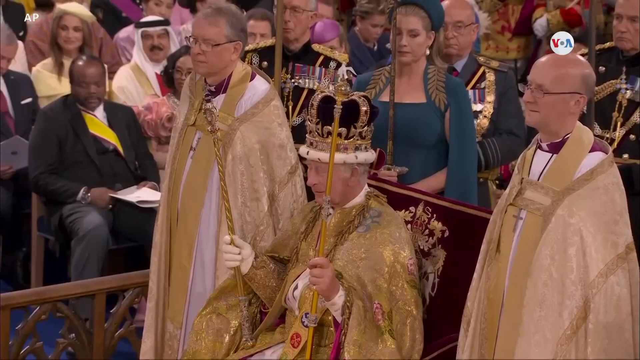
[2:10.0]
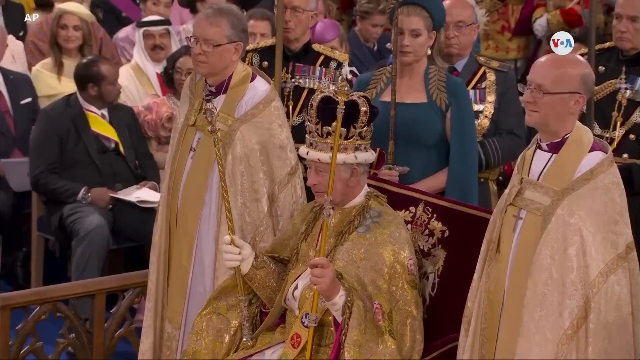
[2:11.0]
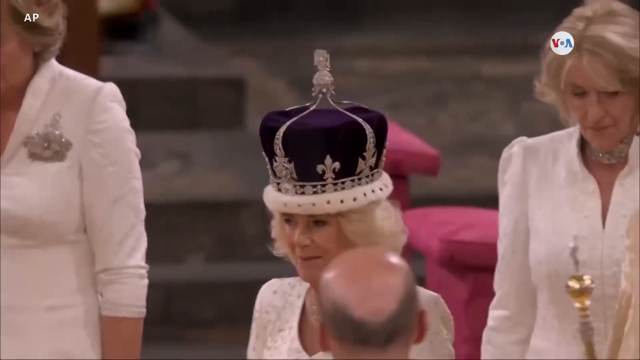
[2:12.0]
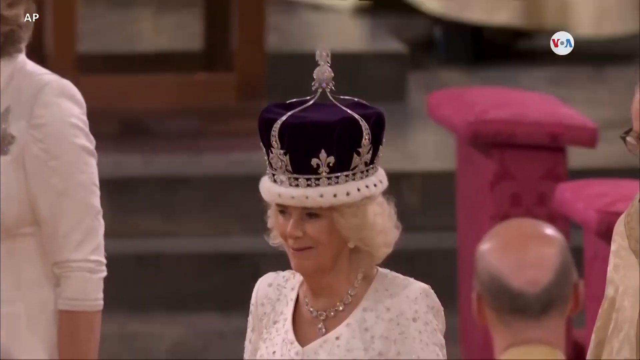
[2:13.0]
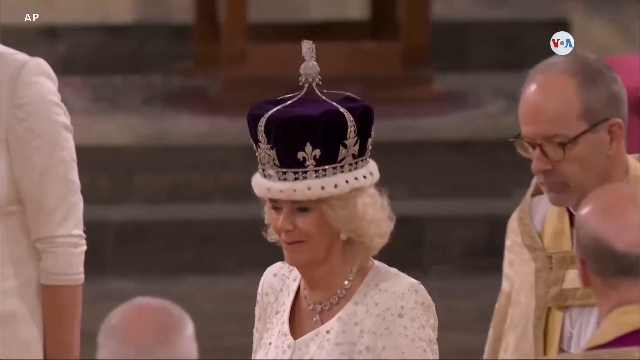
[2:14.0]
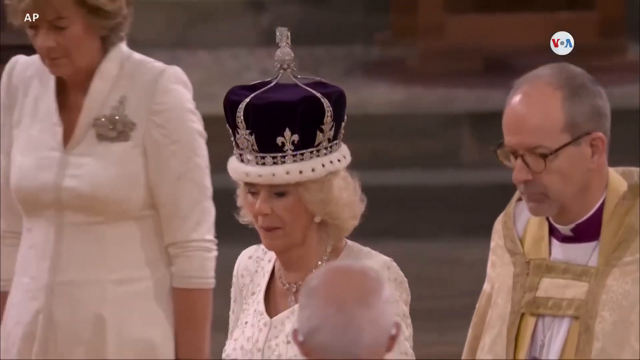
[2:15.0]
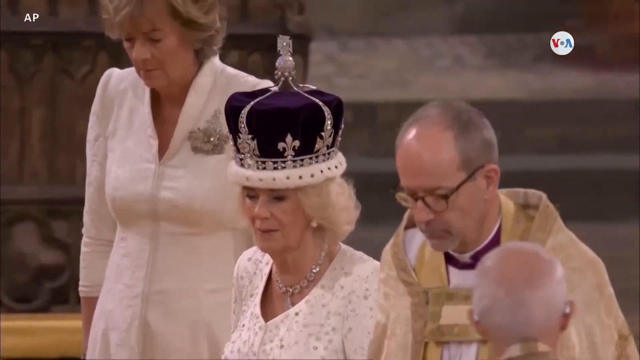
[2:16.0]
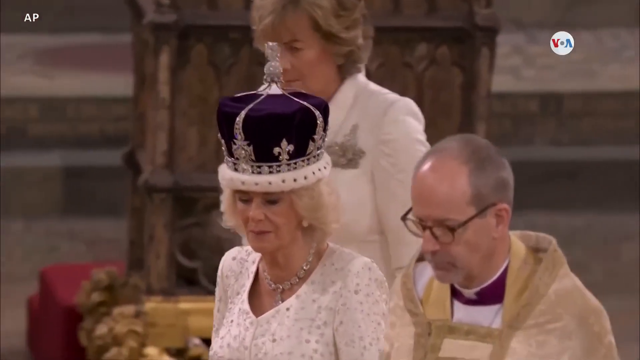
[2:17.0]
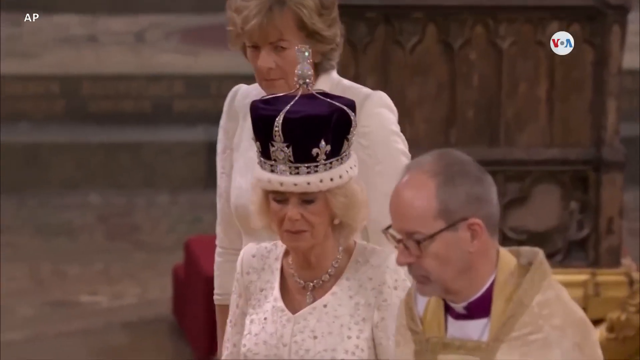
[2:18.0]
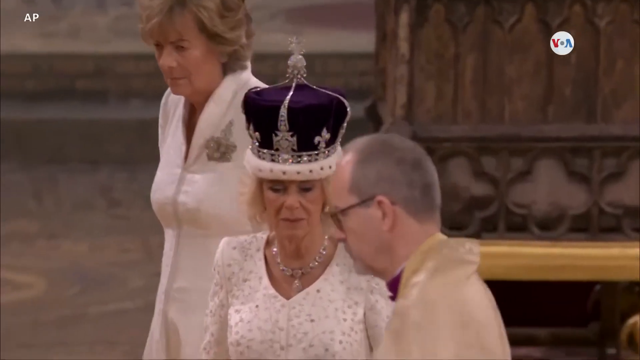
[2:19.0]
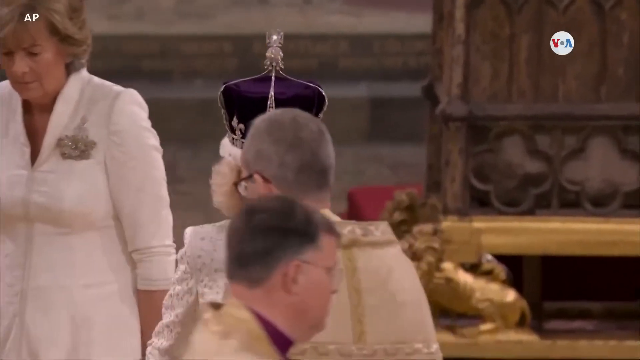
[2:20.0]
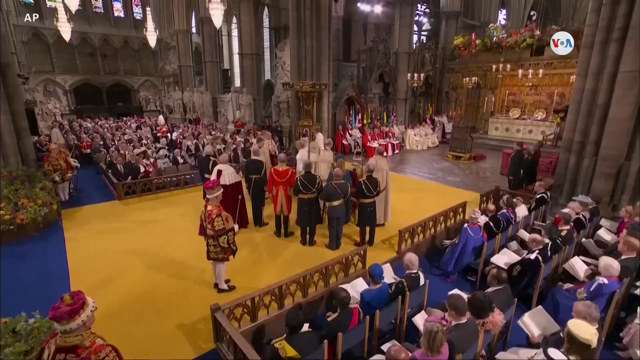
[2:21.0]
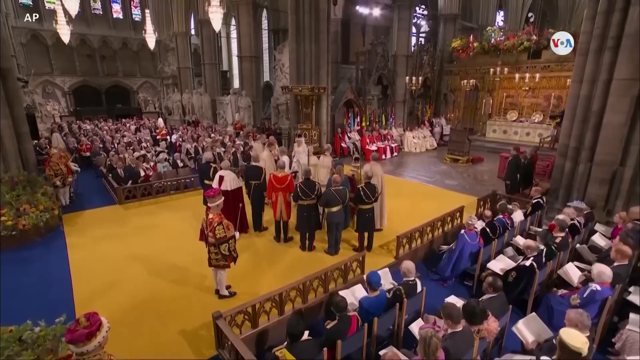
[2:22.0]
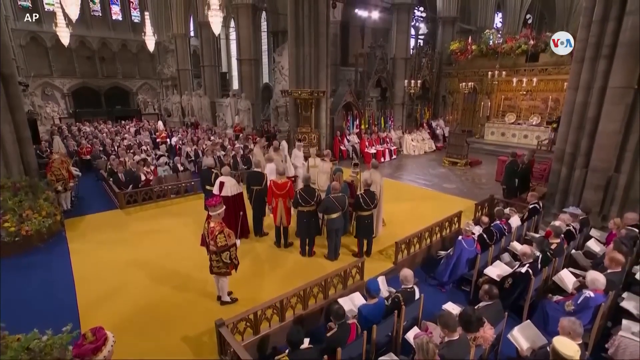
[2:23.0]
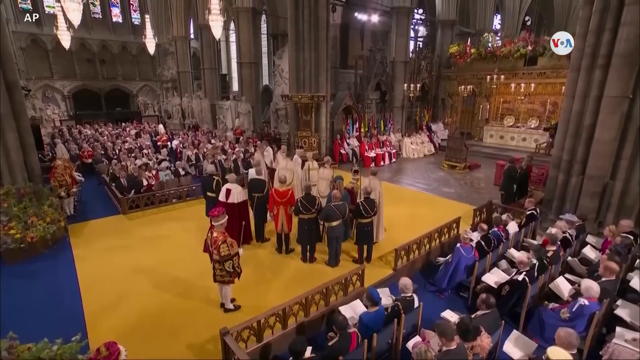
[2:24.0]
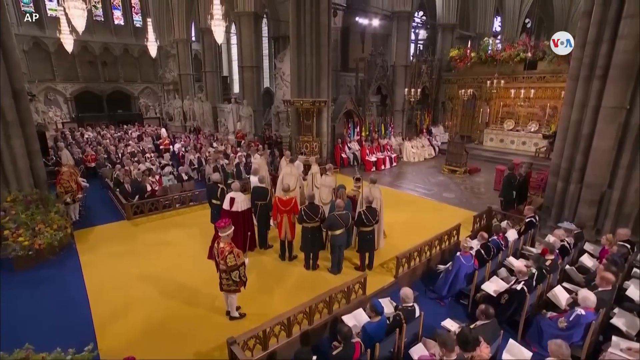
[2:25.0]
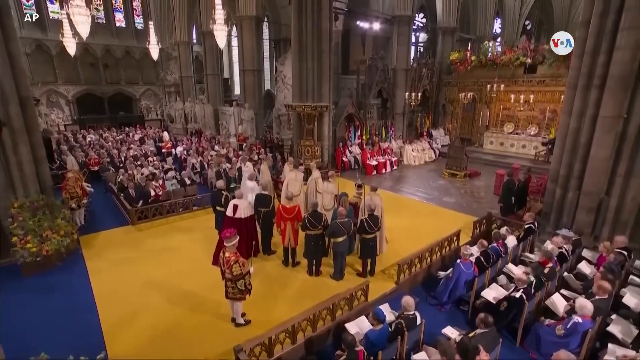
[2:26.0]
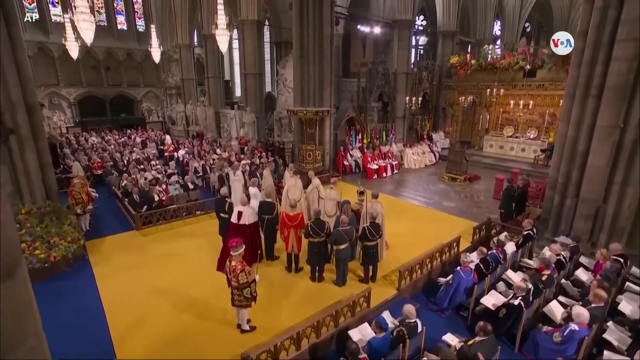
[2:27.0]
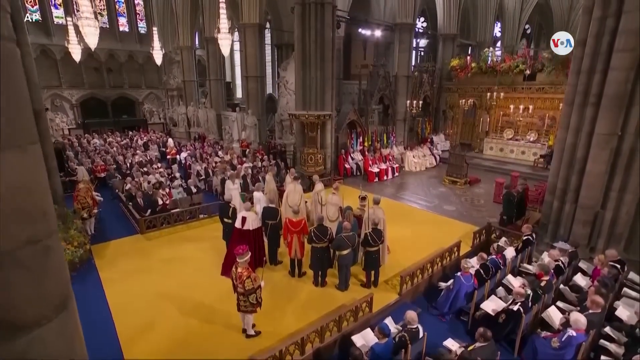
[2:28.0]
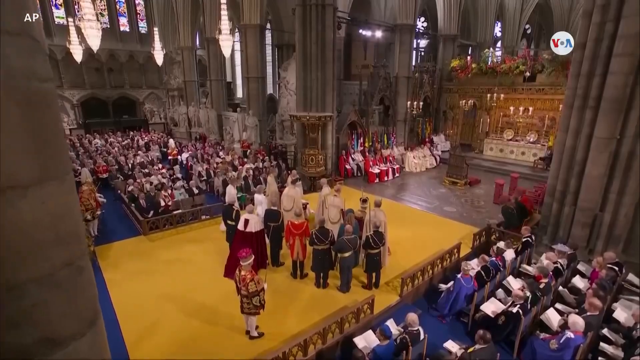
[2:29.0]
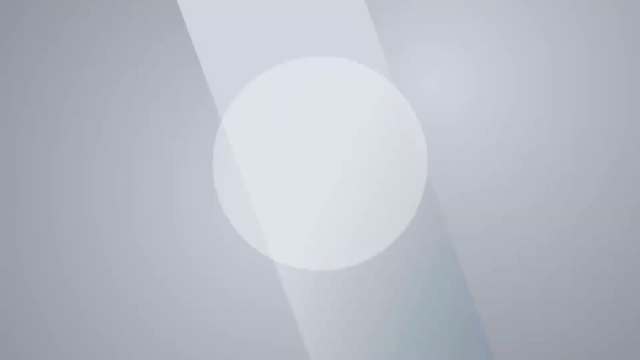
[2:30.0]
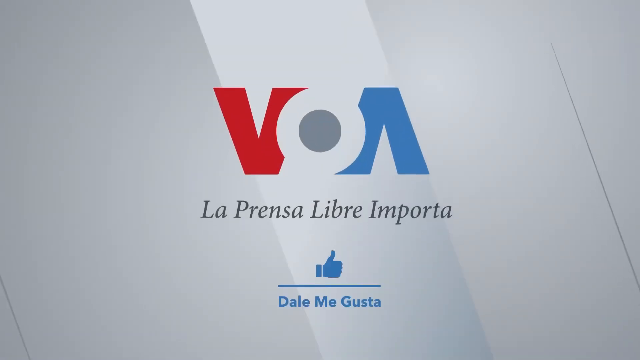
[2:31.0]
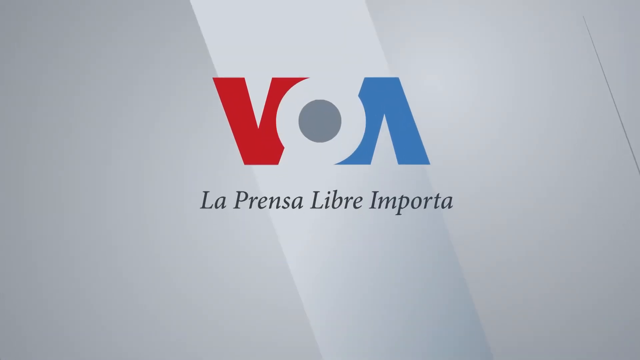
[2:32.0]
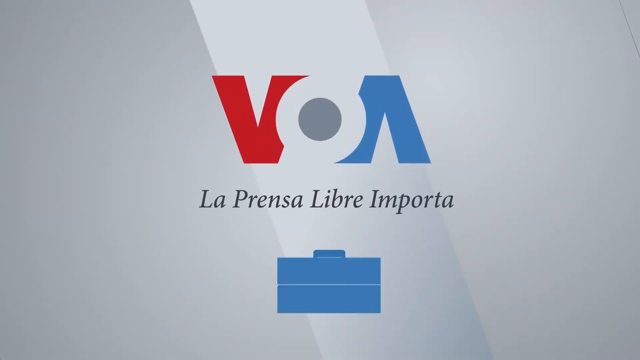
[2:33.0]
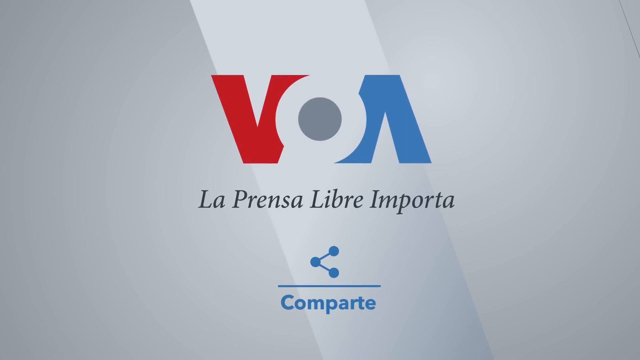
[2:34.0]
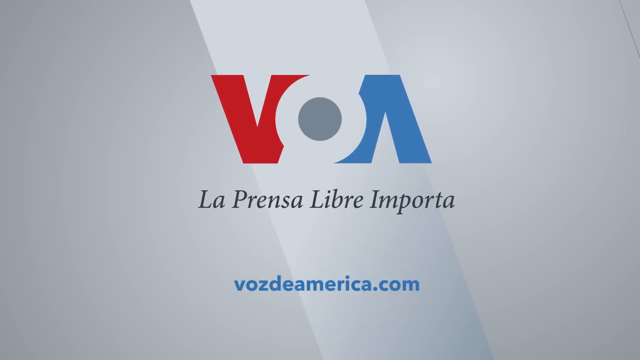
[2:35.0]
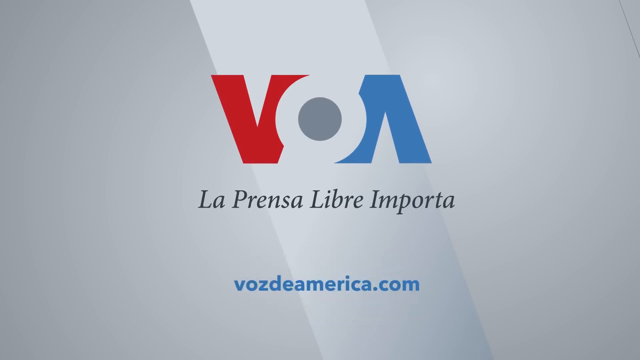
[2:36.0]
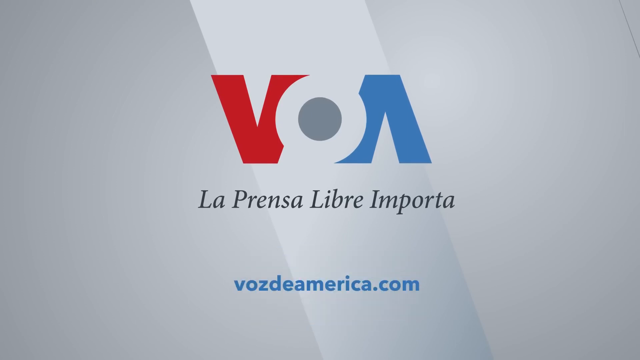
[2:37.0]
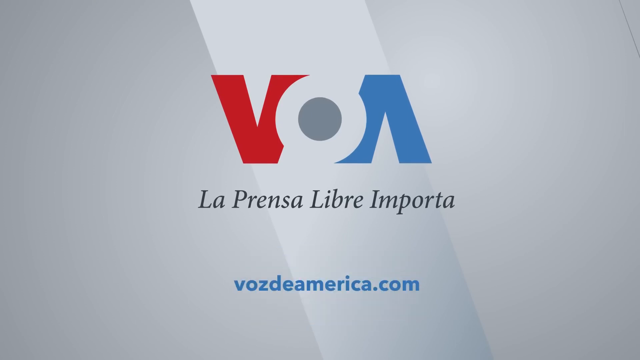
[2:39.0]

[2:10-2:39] King Charles sits on his red throne at Westminster Abbey, holding two gold rods, with a gold crown containing silver on his head. The crown looks heavy, and he looks uncomfortable. The video cuts to his wife, Camilla, whose crown is predominantly purple, like a purple velvet material, with silver and other jewels around it and a white trim. She is walking, and a pink seat is behind her, looking very similar to the one she sat on when she was crowned. Behind her is a woman in white with some sort of crown decoration on the left breast of her dress, and a man in a cloak walks beside the Queen, to her left. A medium shot shows the yellow carpet in the middle of the hall and people dressed in blues, blacks, reds and whites moving; it looks as though people are perhaps leaving and the ceremony is over. The video then cuts to a red, white and blue news emblem that says "La Prensa Libre Importa", with the letters "VOA".